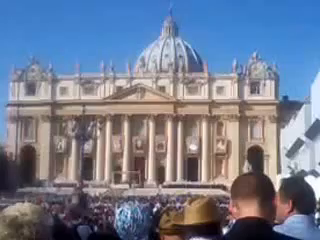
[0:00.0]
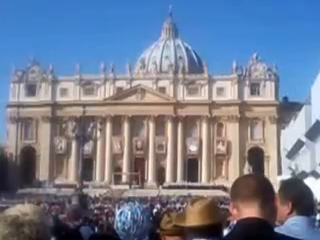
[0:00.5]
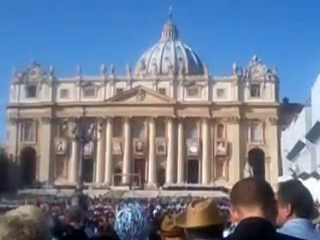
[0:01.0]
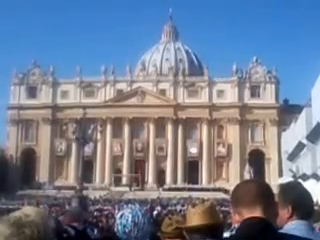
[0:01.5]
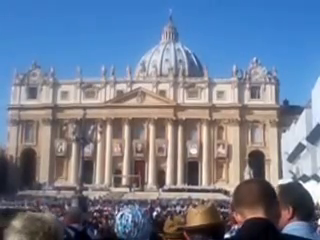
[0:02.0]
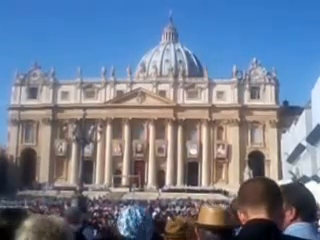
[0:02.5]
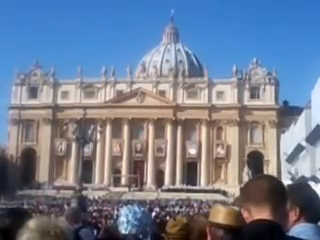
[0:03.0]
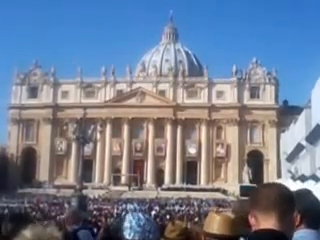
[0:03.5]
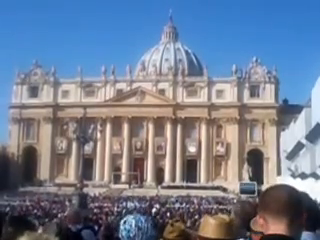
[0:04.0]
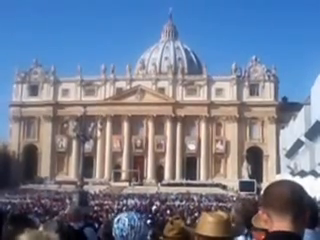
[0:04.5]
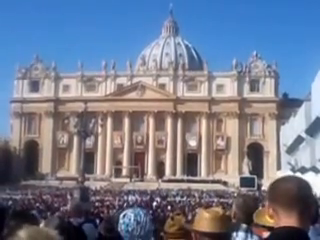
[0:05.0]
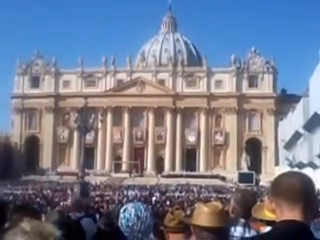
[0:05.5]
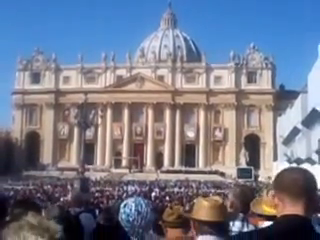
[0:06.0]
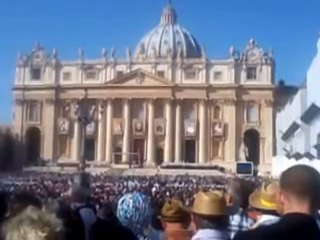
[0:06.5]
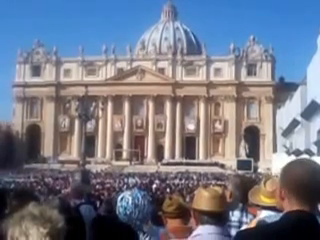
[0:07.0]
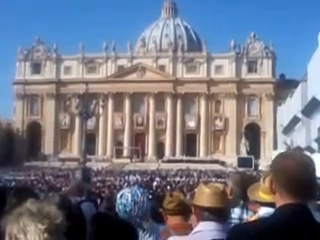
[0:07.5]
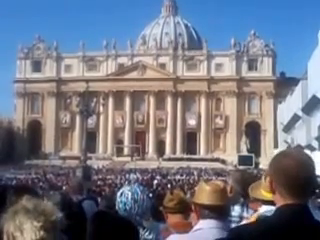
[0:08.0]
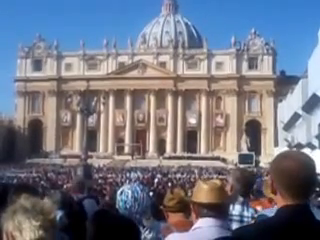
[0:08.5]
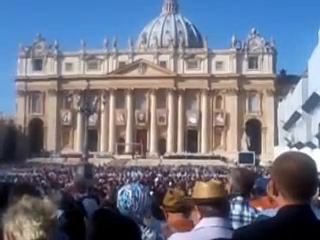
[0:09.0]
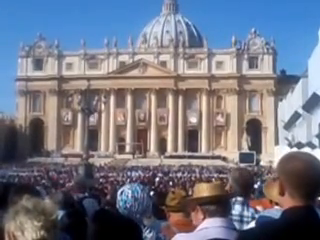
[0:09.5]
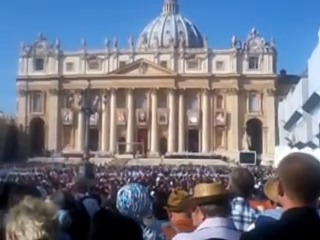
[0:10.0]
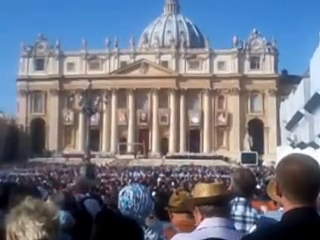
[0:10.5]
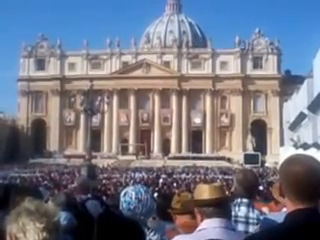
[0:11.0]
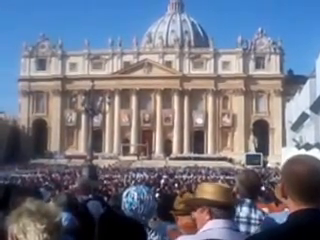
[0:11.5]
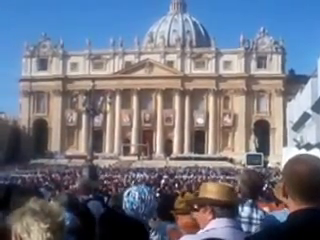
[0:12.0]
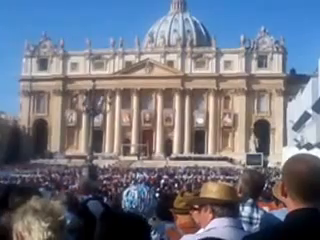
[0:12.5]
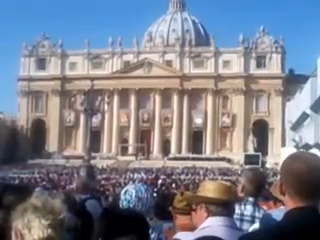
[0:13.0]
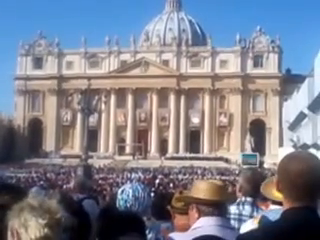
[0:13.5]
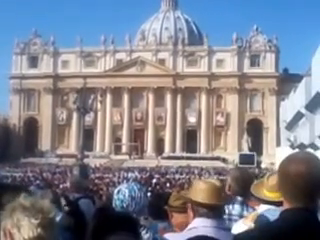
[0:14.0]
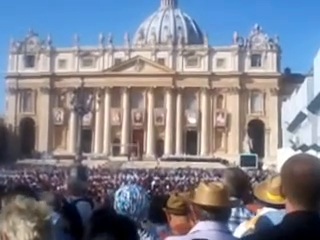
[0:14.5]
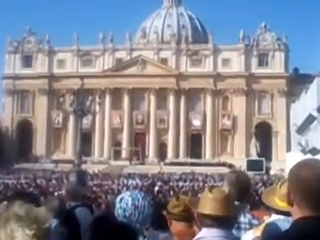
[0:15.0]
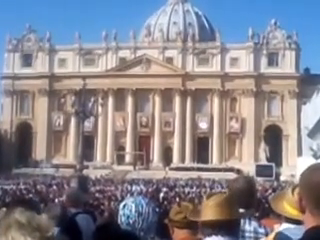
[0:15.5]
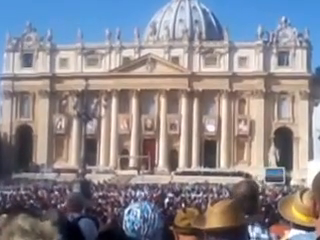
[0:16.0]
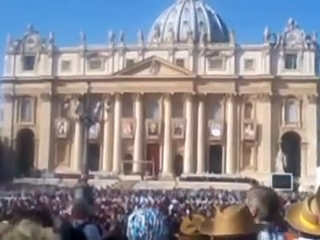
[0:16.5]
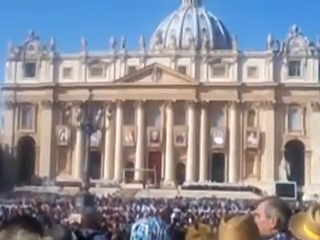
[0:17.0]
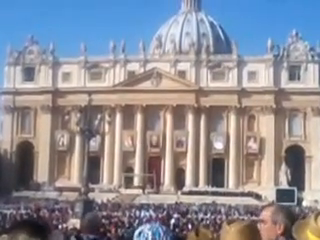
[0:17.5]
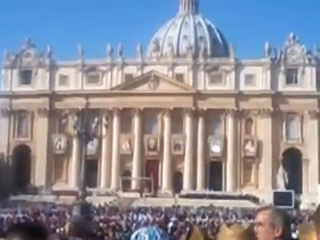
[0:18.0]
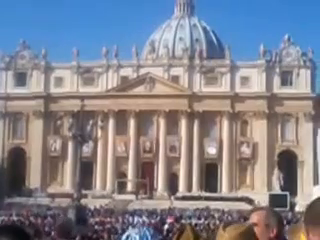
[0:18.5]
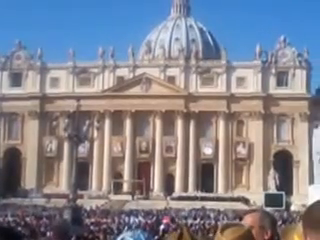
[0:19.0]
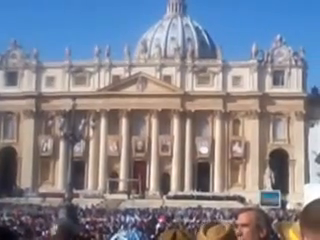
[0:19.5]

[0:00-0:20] The scene shows a building that looks like St Peter's Basilica in Rome, Italy. The building is white with central columns and a rounded dome in the centre toward the rear, under a blue sky. A very large crowd is in front of the building, and it looks as though there is about to be an announcement. The building's architectural detail is very intricate, with a stone façade at the front, though the video quality is quite poor and the detail of the building cannot be made out. People in the crowd are taking a video of the scene in front of them. The crowd gently moves from foot to foot as they wait for something to happen, and some people wear hats, apparently for protection against the sun as they stand for what looks to be quite a long time.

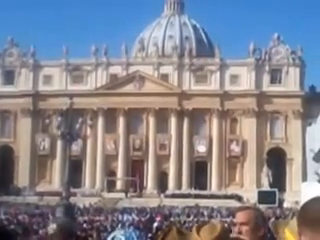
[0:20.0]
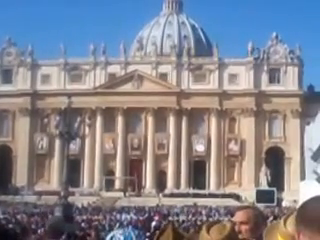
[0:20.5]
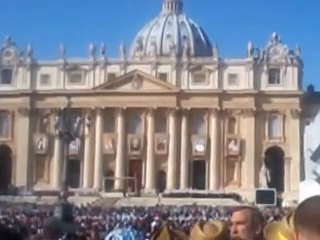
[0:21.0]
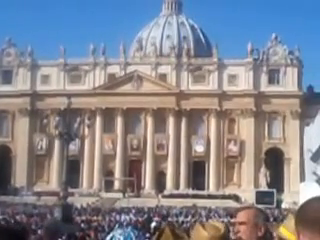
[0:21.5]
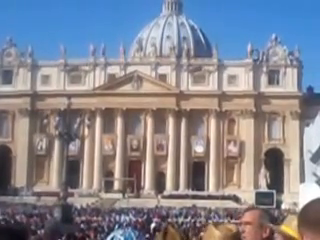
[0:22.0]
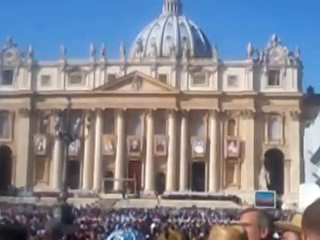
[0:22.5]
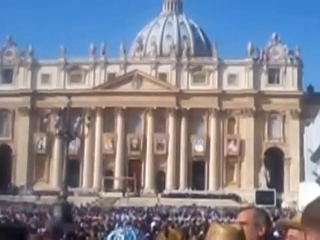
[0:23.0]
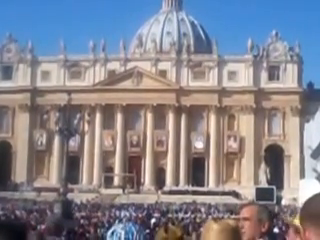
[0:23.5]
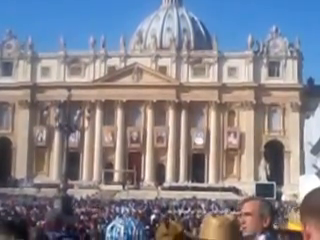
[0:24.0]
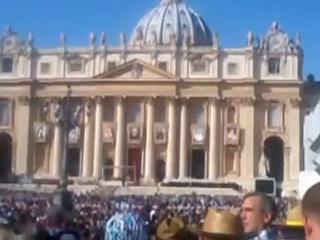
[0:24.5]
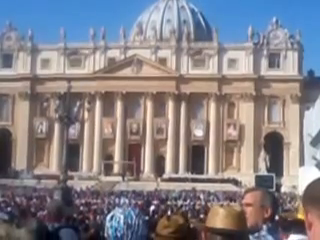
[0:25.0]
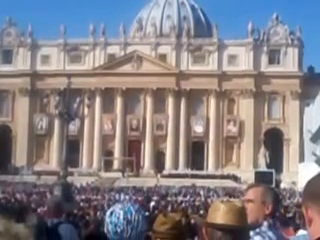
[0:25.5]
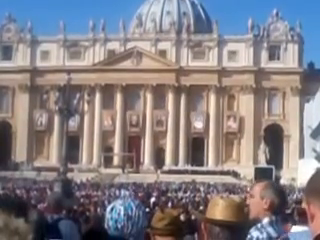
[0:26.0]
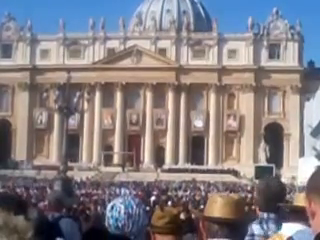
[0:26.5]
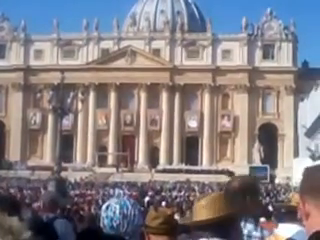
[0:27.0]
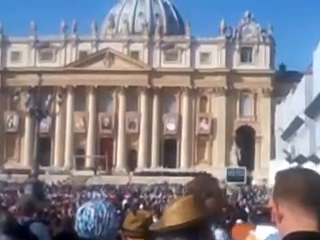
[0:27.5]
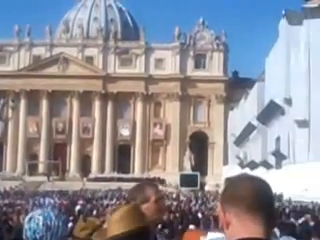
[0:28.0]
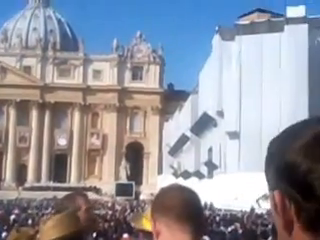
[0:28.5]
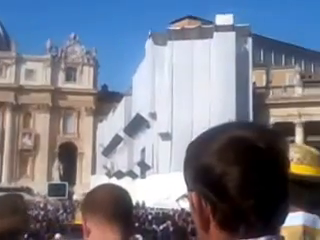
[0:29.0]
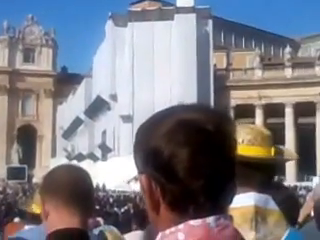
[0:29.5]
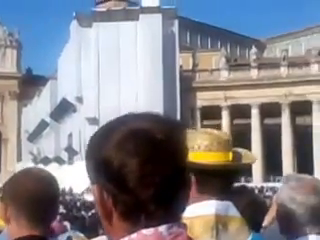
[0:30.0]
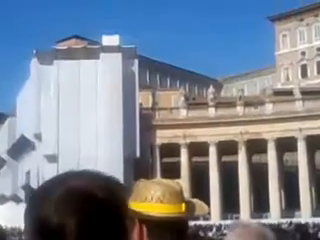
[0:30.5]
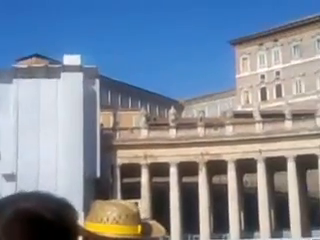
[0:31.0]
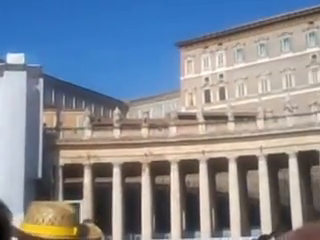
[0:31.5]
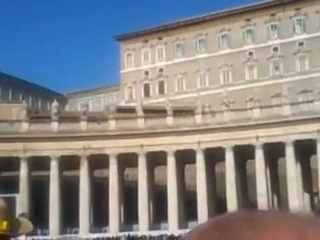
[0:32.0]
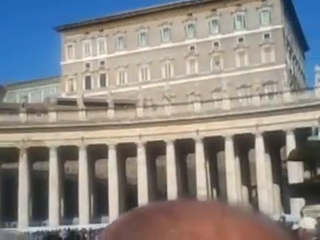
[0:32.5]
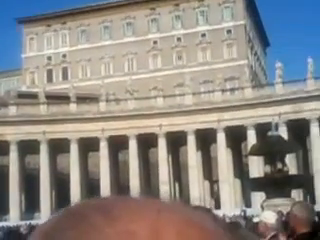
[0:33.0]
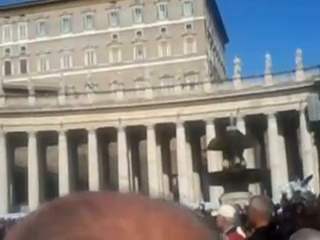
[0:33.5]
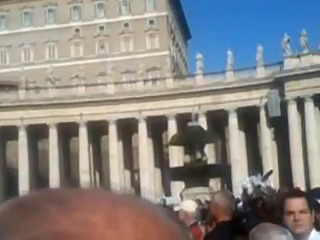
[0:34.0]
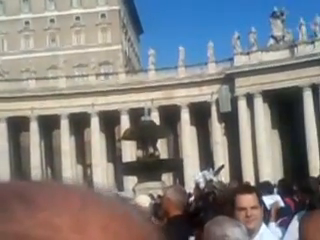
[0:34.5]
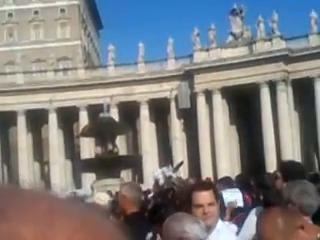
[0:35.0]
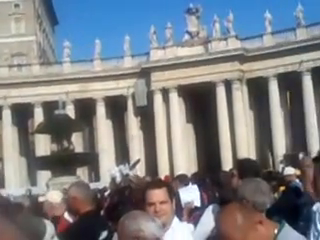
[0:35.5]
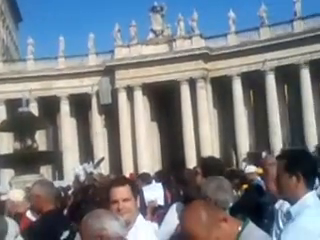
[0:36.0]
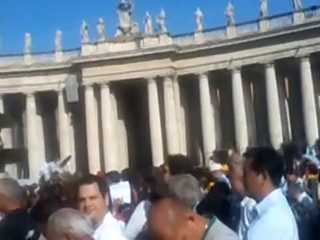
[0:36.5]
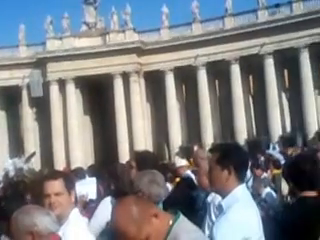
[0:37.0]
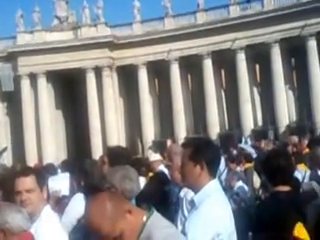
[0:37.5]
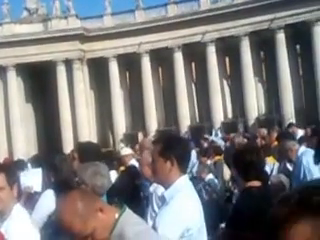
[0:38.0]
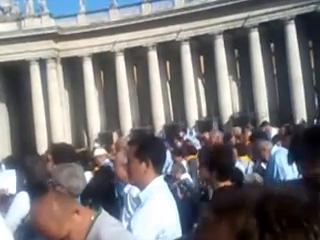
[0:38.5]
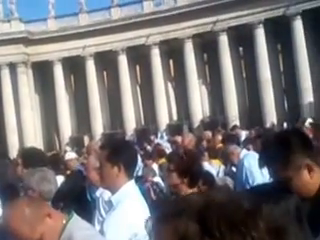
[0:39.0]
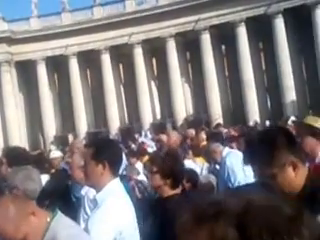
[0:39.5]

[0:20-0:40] The front facade of St. Peter's Basilica in Rome, Italy, is shown, with a massive crowd outside looking around at all parts of the Vatican Square and the pillars that surround the square. The people wait expectantly with cameras at the ready, possibly waiting for the Pope to appear or for some announcement about the Pope. The sky is a brilliant blue with no clouds. The camera moves around to take in the crowd and the buildings. The columns and the statues on top of the building are seen in more detail as everyone waits in the sunshine, and the building casts different shadows in the sunlight as the crowd looks on.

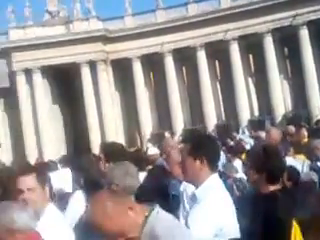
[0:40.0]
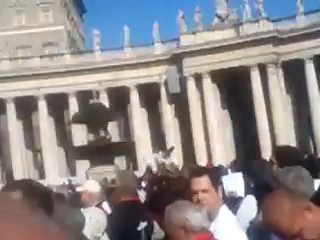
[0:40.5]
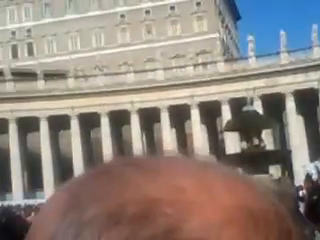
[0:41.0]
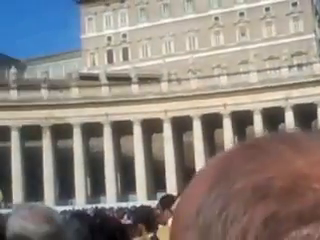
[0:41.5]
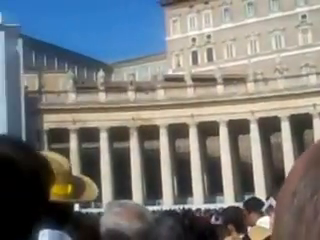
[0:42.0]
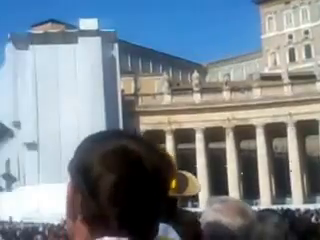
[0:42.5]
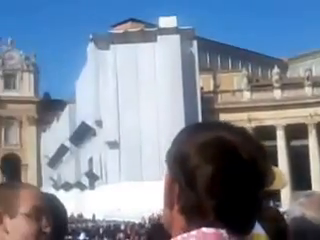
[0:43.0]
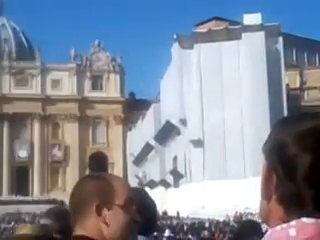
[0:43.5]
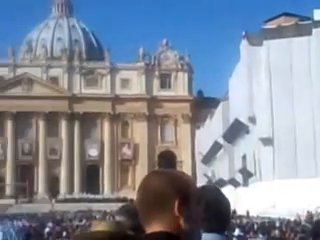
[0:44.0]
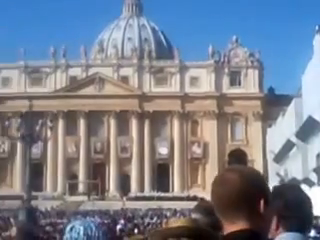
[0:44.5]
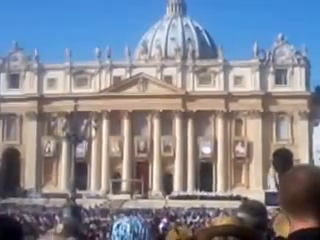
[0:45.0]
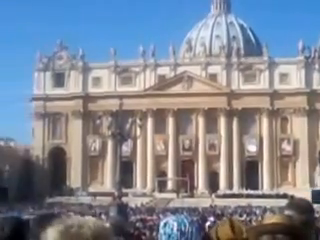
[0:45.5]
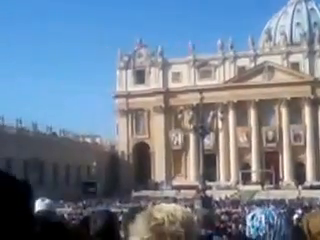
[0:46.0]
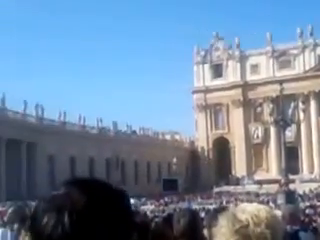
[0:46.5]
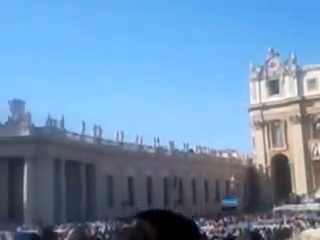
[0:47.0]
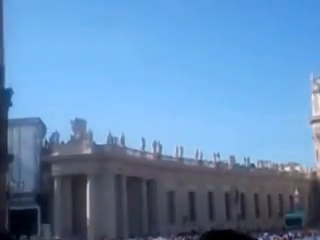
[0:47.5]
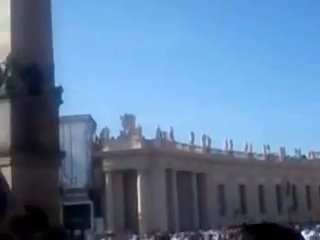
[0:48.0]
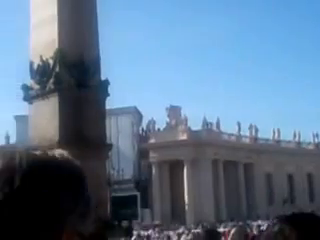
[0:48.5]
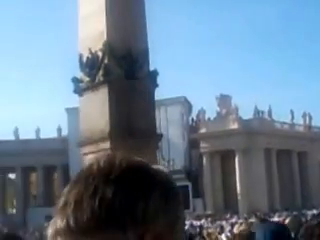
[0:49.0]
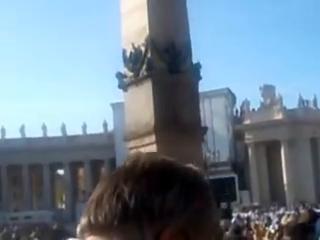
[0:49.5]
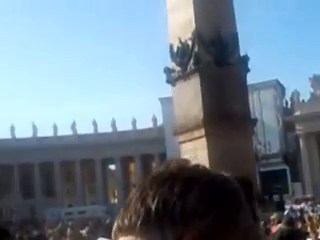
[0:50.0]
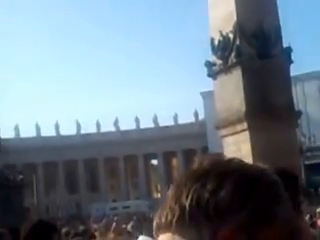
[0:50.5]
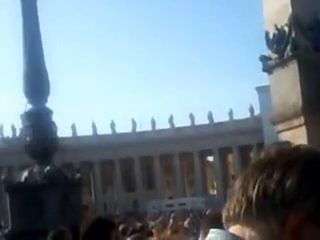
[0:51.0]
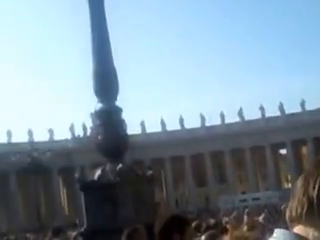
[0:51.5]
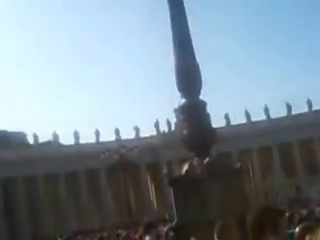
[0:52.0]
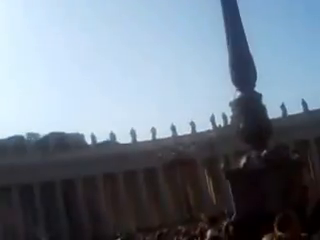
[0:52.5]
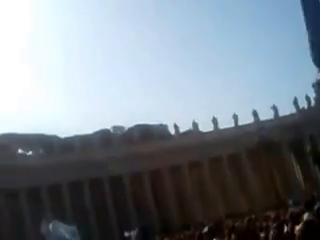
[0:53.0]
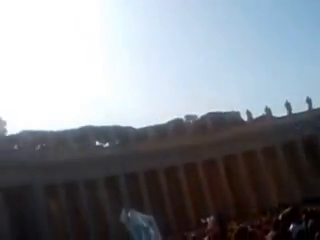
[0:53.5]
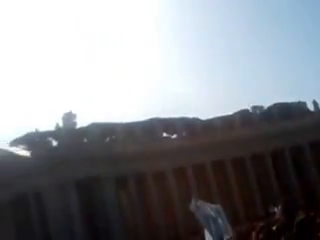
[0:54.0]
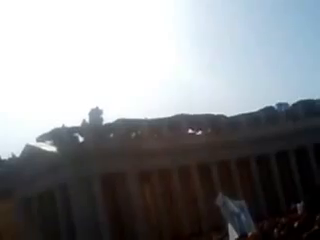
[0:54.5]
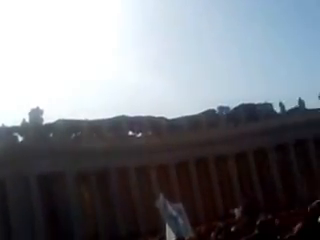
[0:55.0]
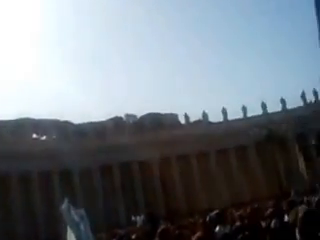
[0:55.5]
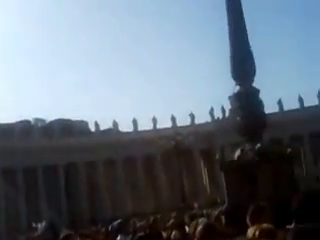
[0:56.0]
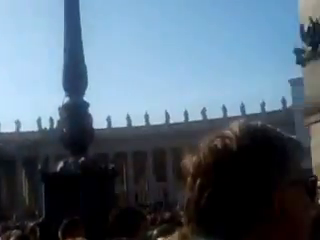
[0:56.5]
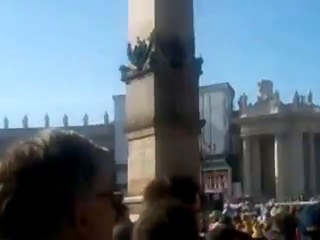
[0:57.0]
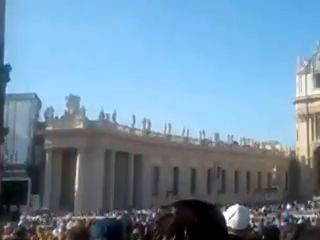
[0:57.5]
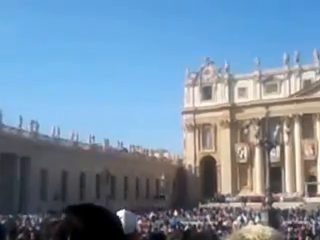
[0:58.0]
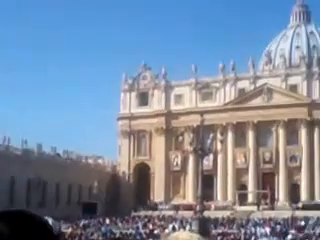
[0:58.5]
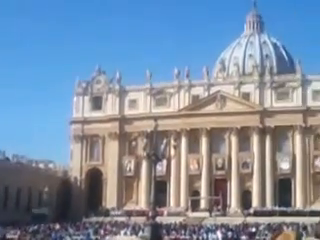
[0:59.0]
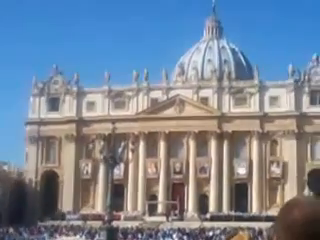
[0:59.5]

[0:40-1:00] A panning shot does a 360-degree sweep of the Vatican Square and St Peter's Basilica in Rome, Italy, showing the square with its corridors surrounded by cream stone pillars that have statues on top in line with the pillars. In the background is another stone building that is part of Vatican City. Some of the crowd are looking around, some are apparently talking, and some are waiting expectantly for something to happen. A white building is to the side, on the right of the front of St Peter's Basilica. There is a lamppost in the middle of the square and some sort of stone plinth, though it is not visible what, if anything, is on top of it. The sky is still without a cloud. A person wearing a straw hat with a yellow ribbon is standing one person in front of the one filming.